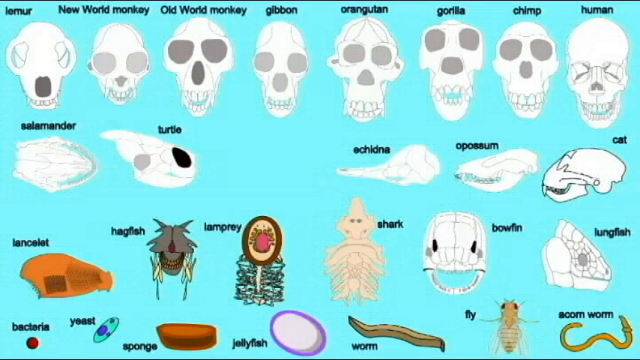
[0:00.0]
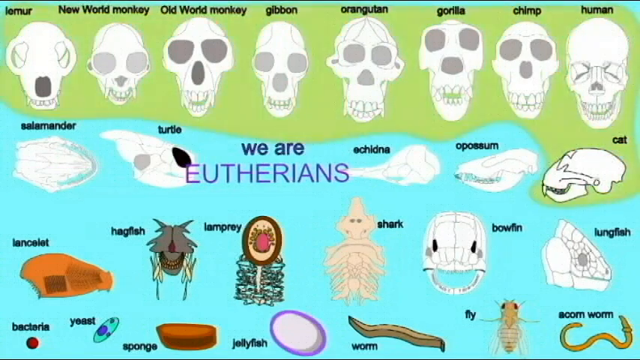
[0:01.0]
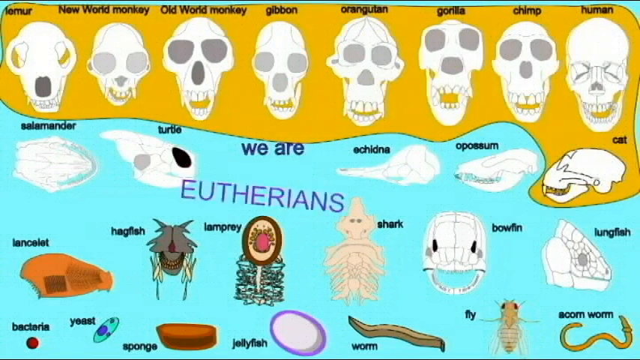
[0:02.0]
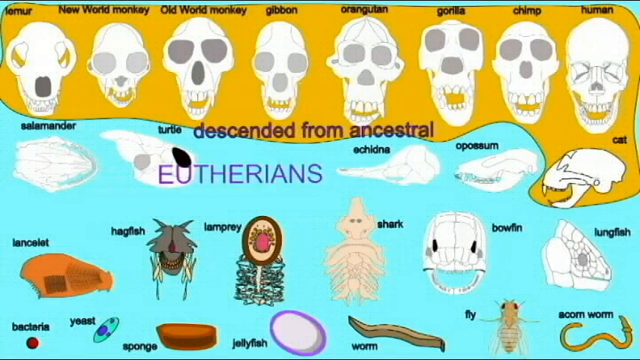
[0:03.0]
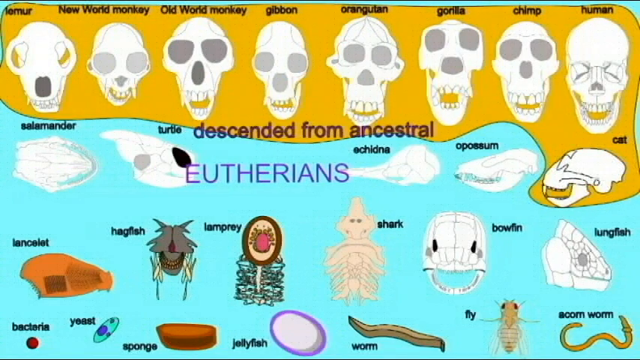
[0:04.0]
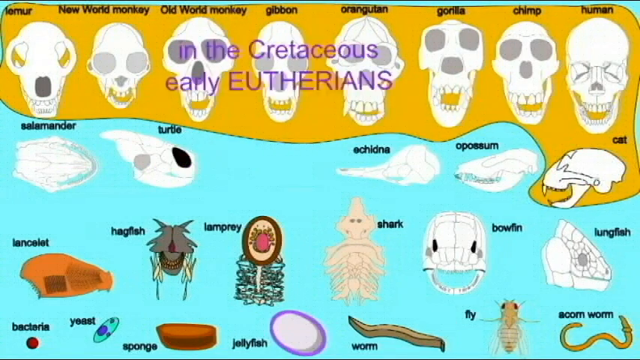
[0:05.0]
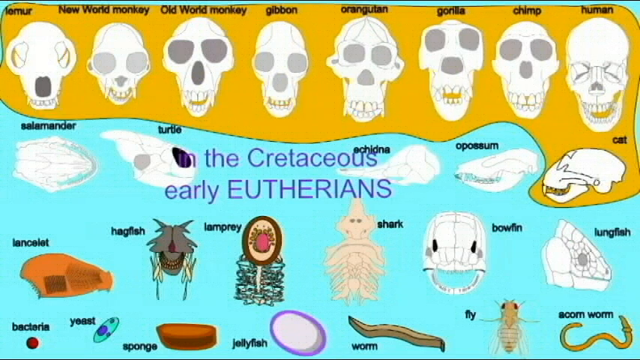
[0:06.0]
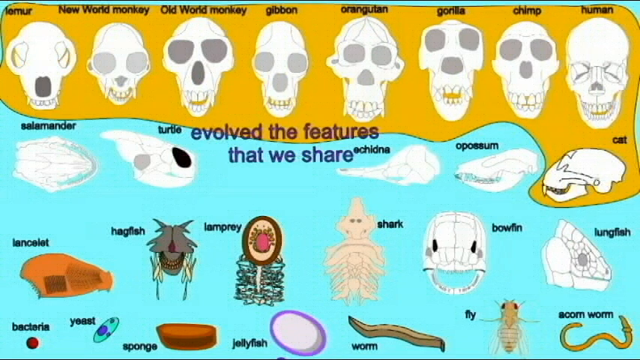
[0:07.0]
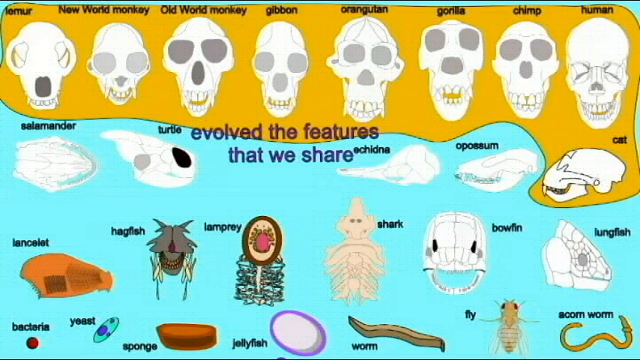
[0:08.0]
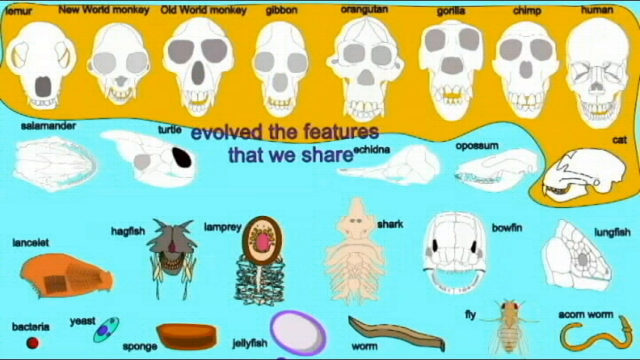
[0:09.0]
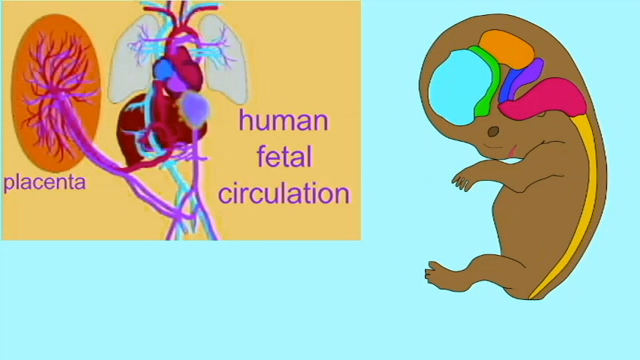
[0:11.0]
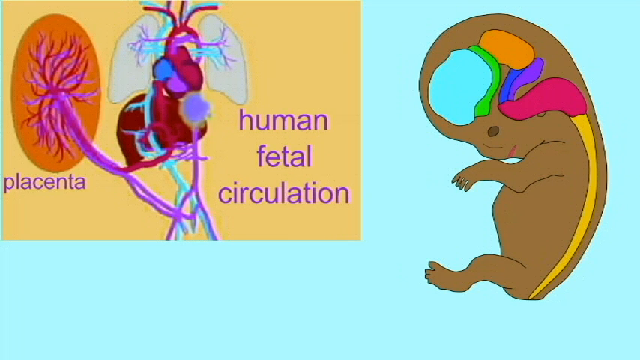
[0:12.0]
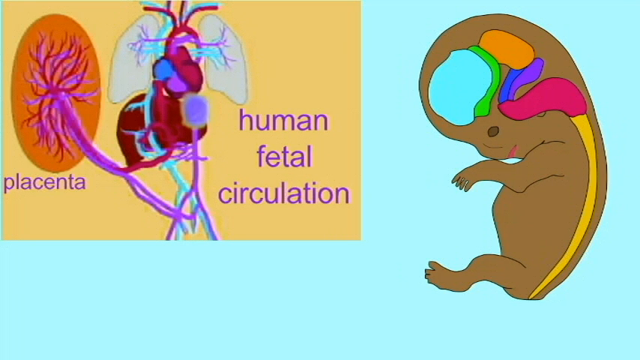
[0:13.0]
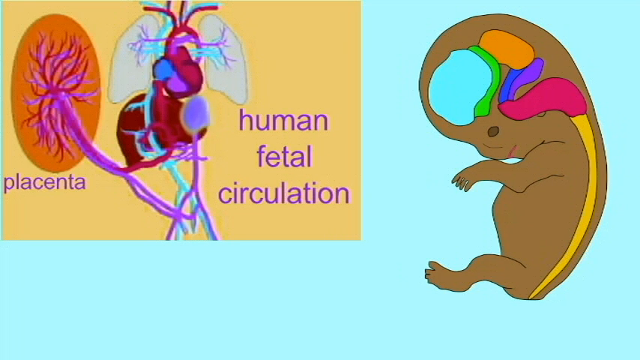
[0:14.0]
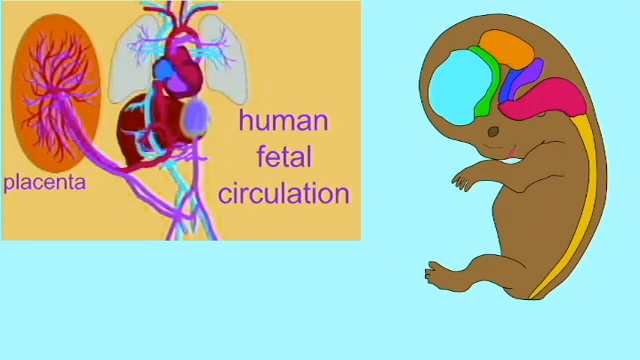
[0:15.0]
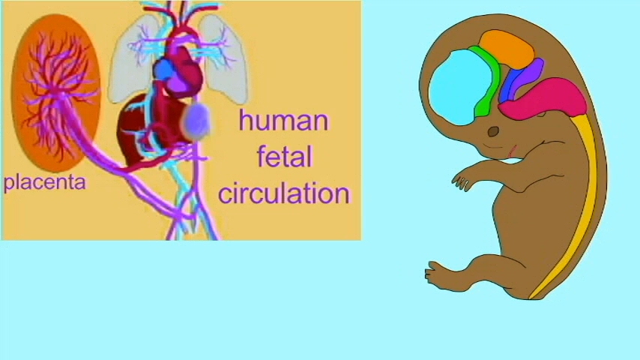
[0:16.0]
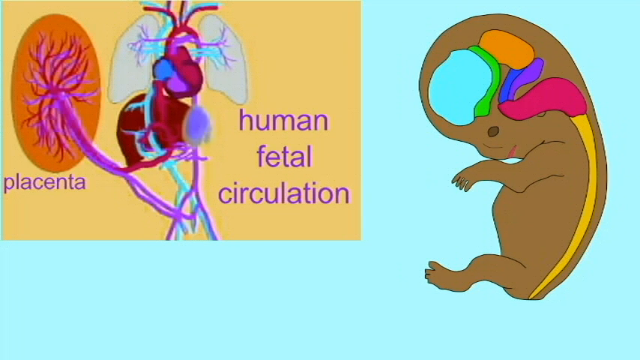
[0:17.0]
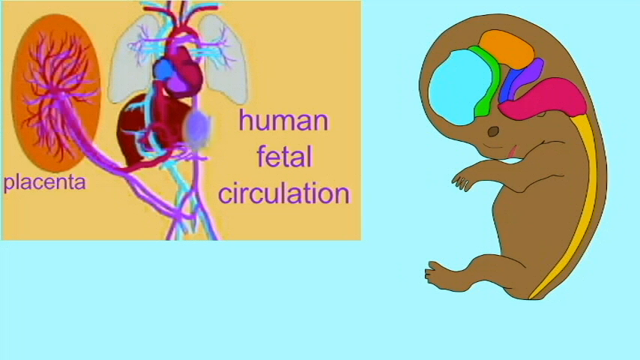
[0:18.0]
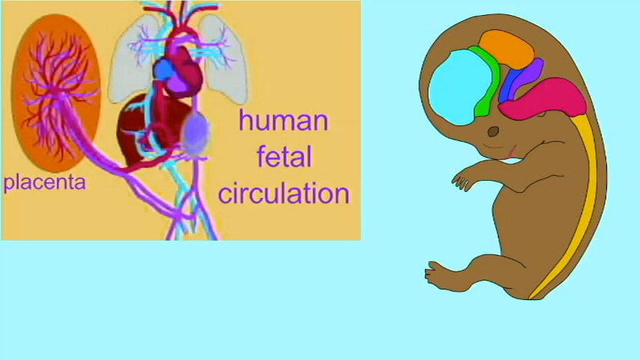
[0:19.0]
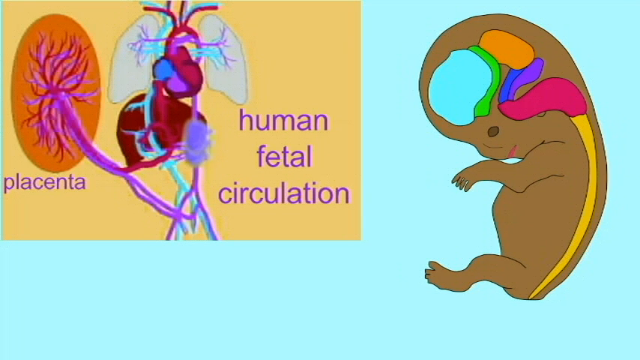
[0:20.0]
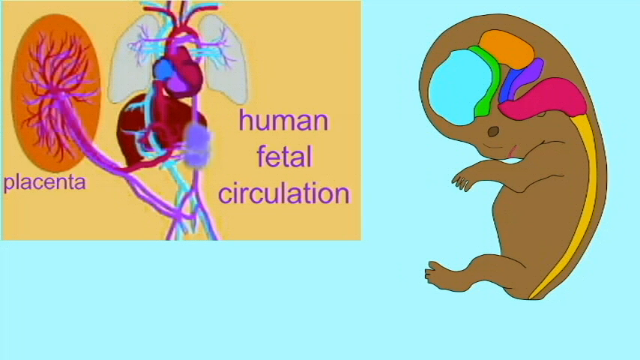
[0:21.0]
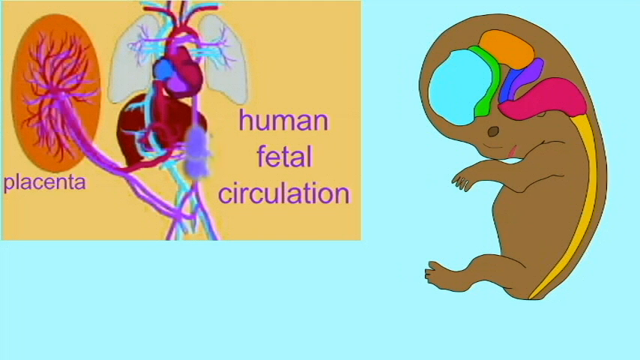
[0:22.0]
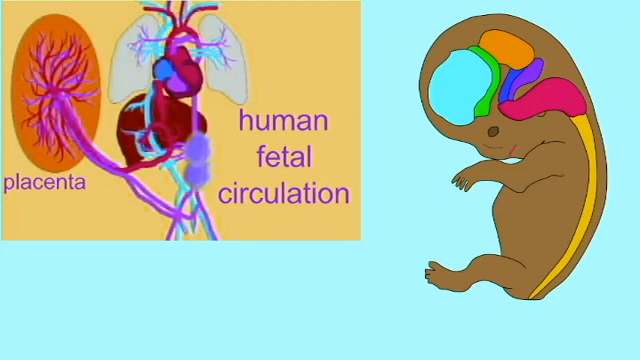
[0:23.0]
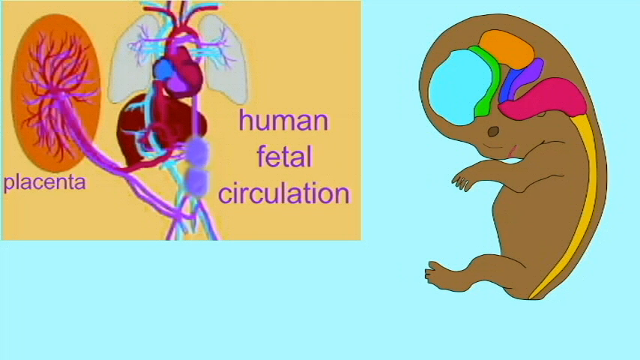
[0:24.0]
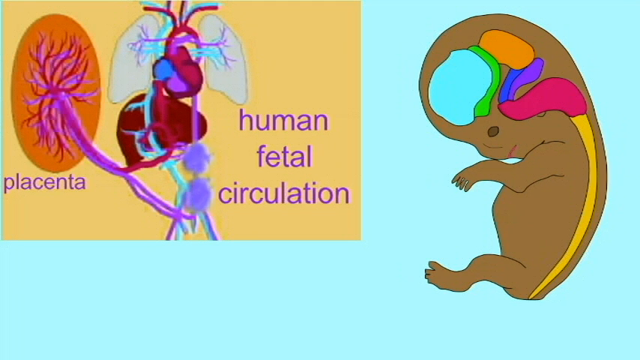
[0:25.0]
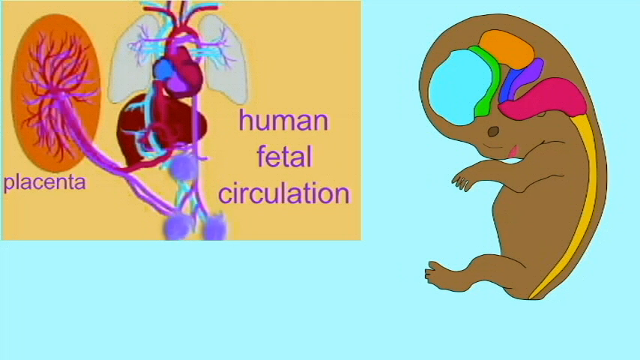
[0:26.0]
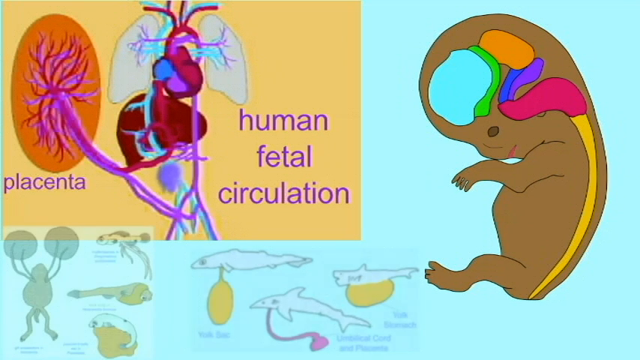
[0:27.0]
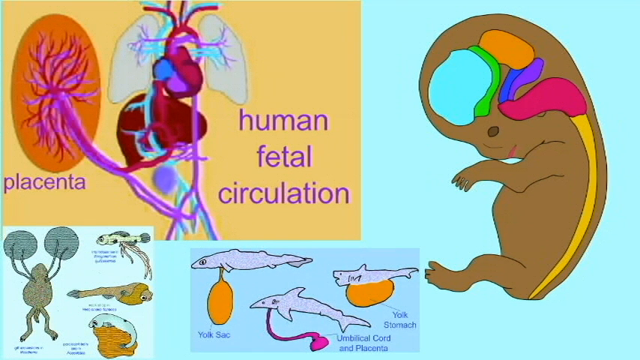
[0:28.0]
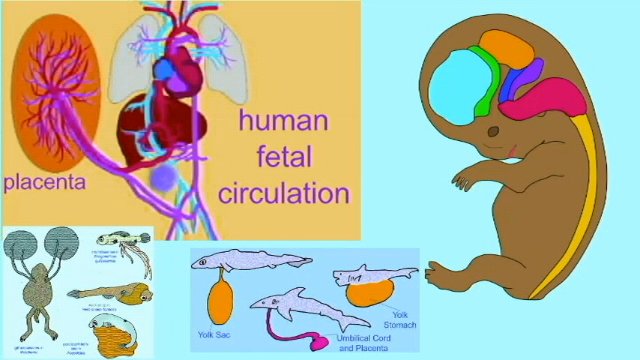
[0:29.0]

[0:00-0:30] Skulls of many different animals are shown in groups: a lemur, a New World monkey, an Old World monkey, a gibbon, an orangutan, a gorilla, a chimpanzee, a human, a cat, an echidna, a turtle, a salamander, a lanceleta, a lamprey, a shark, and three different types of fish. Below them are bacteria, fungi, sponges, jellyfish, two different types of worms and a fly. Parts of these groups are then highlighted, with all of the primates highlighted in yellow, and floating text reads "we are Illtherians". Another floating text reads "descended from ancestral Illtherians", and then another reads "in the Cretaceous early Illtherians evolved the features that we share". The scene transitions to a diagram of a human fetus showing the human fetal circulation, written in purple text, with the placenta connecting to the vena cava and the aorta and the different organs dedicated to supplying oxygen to the fetus. Diagrams of the same structure then appear for at least two other animals, sharks and what seem to be frogs, indicating it is a shared trait.